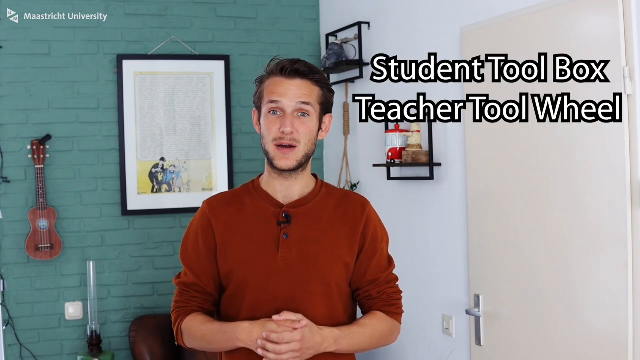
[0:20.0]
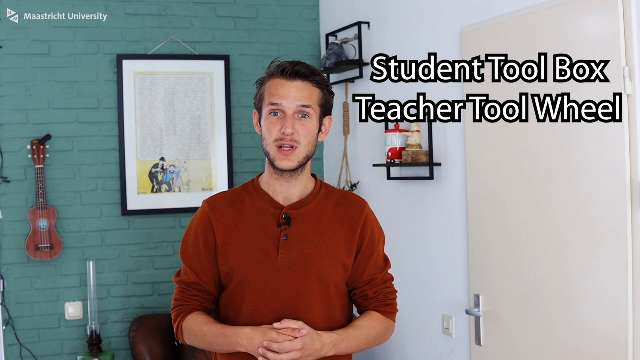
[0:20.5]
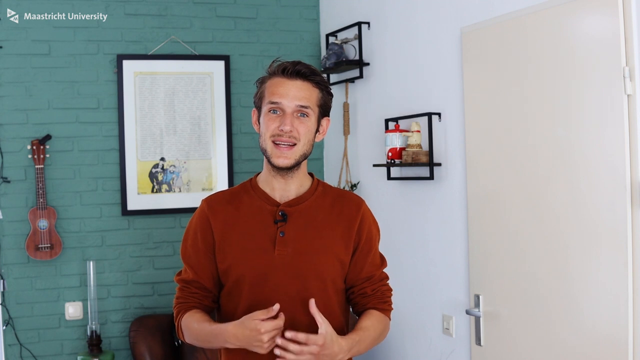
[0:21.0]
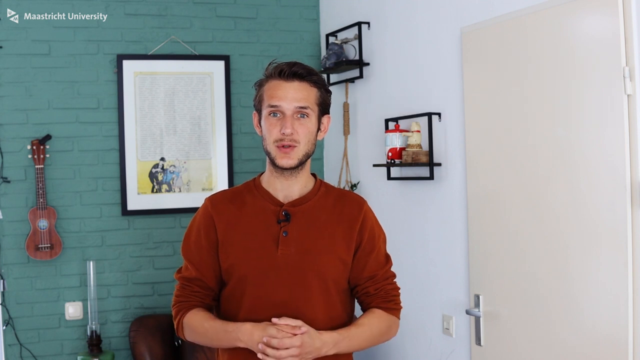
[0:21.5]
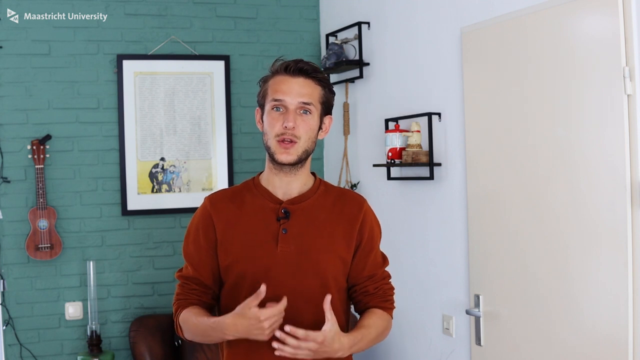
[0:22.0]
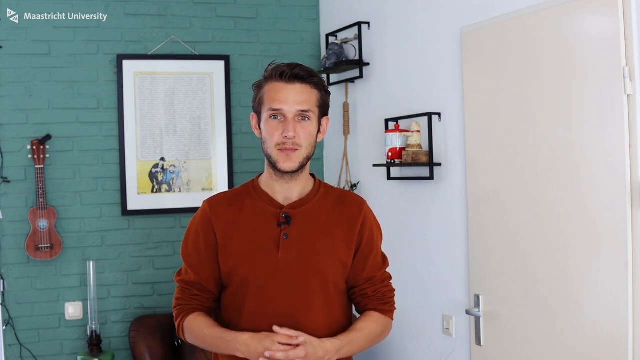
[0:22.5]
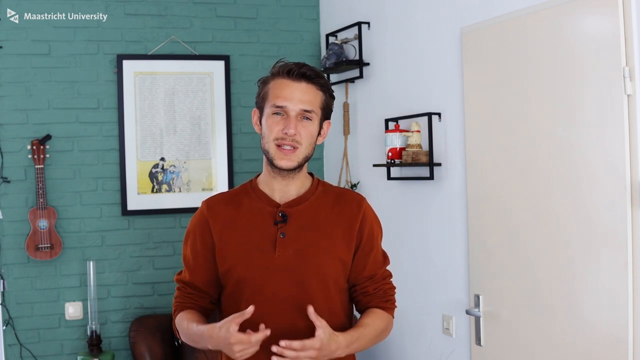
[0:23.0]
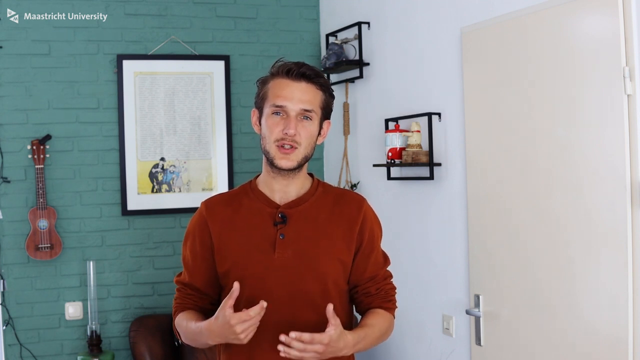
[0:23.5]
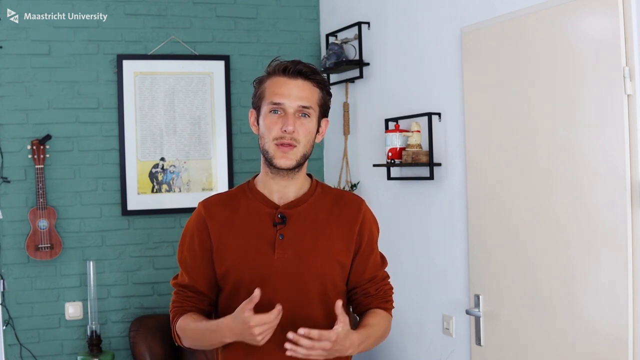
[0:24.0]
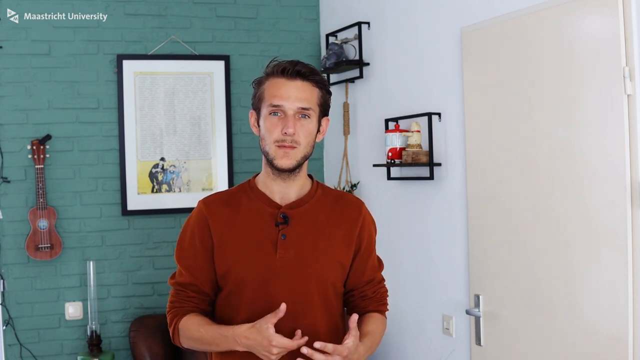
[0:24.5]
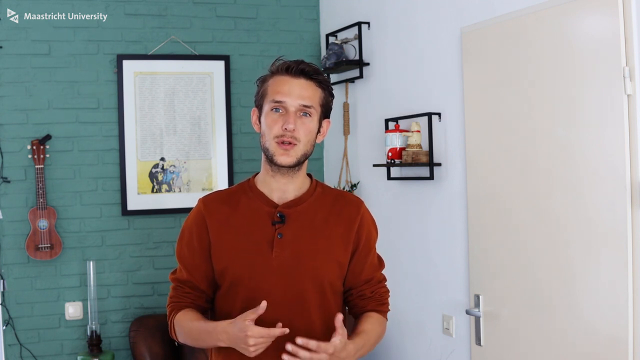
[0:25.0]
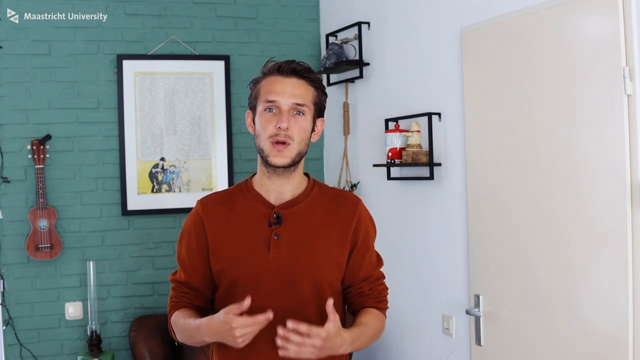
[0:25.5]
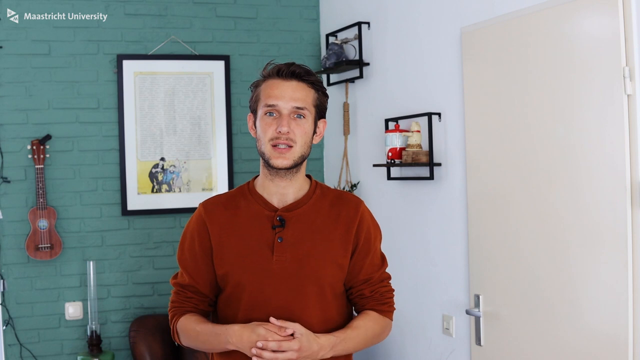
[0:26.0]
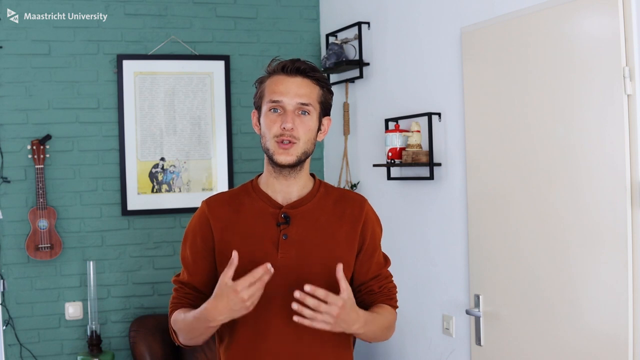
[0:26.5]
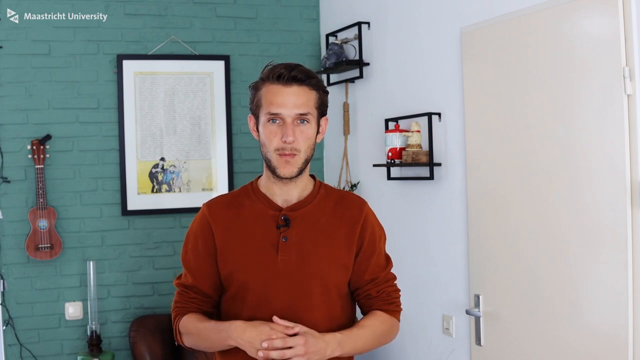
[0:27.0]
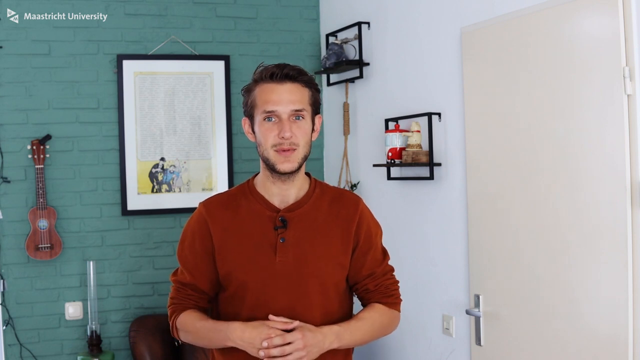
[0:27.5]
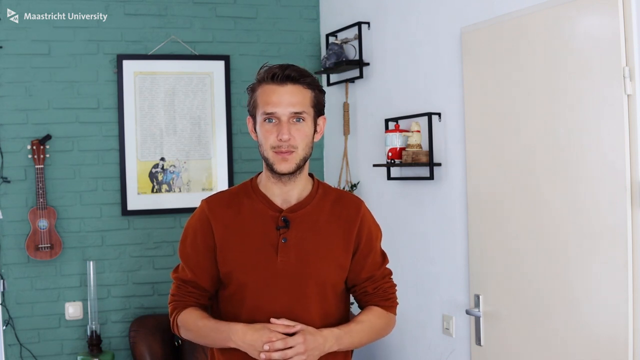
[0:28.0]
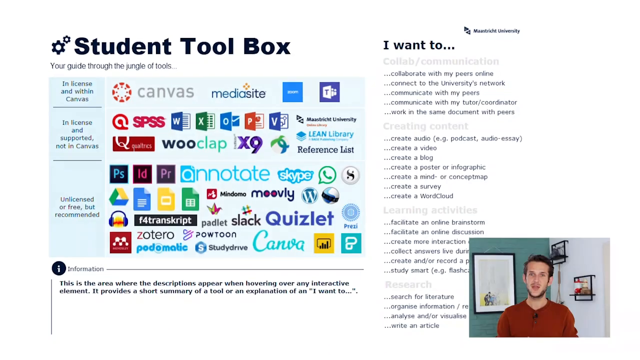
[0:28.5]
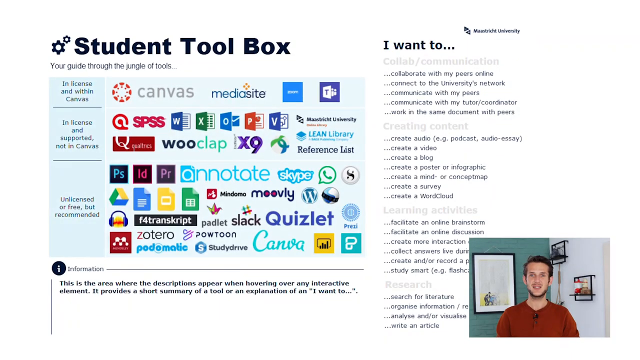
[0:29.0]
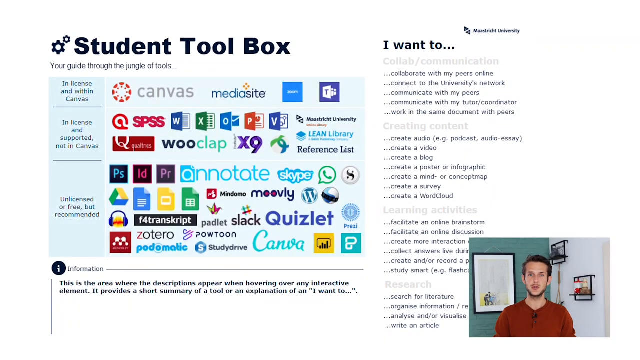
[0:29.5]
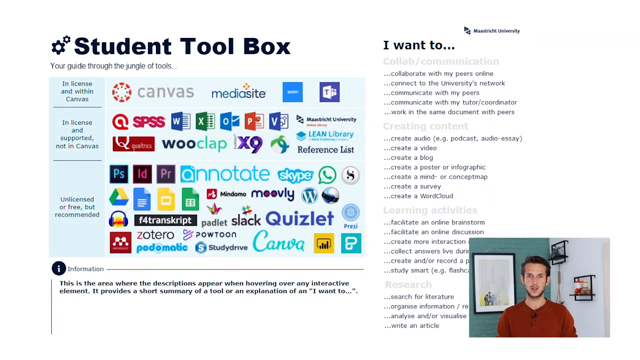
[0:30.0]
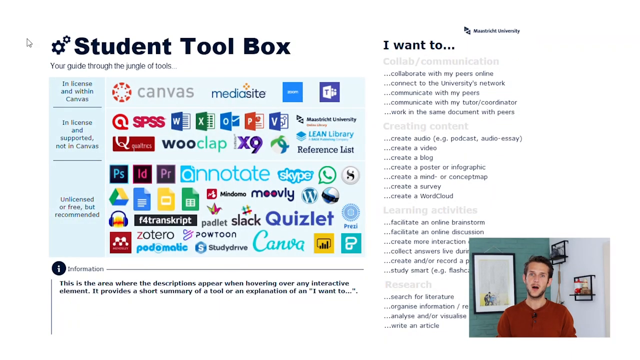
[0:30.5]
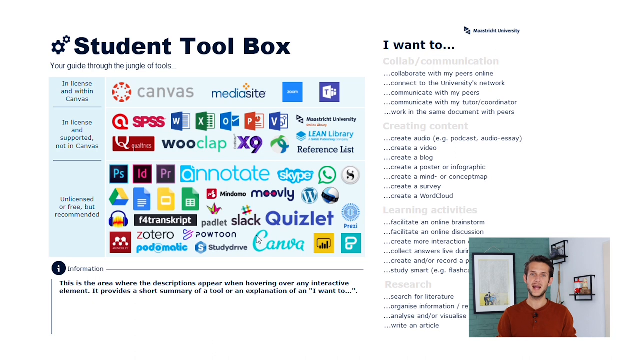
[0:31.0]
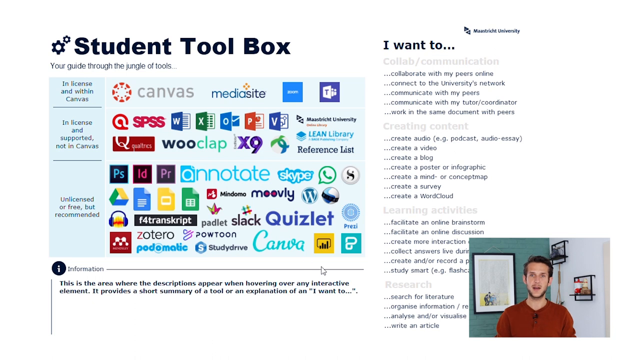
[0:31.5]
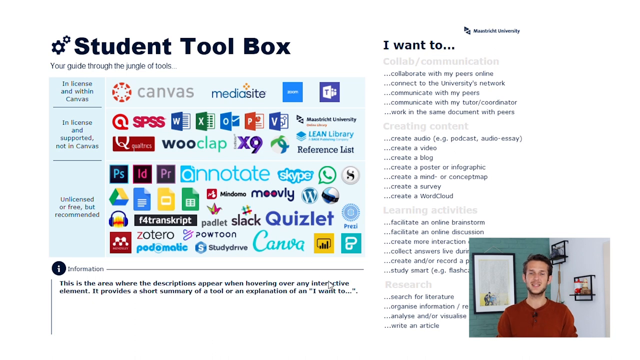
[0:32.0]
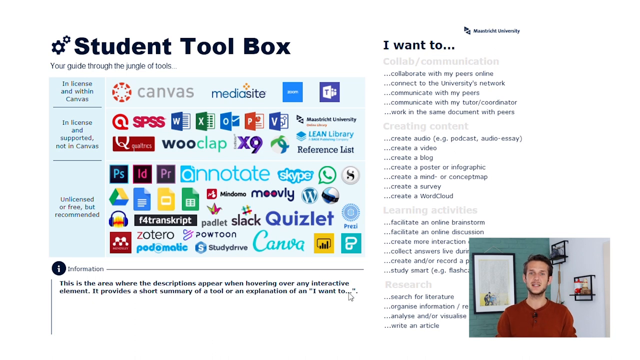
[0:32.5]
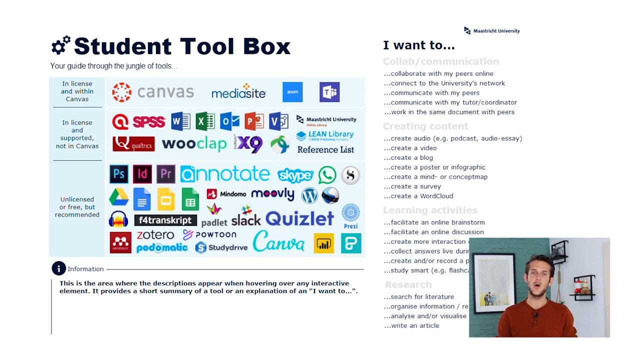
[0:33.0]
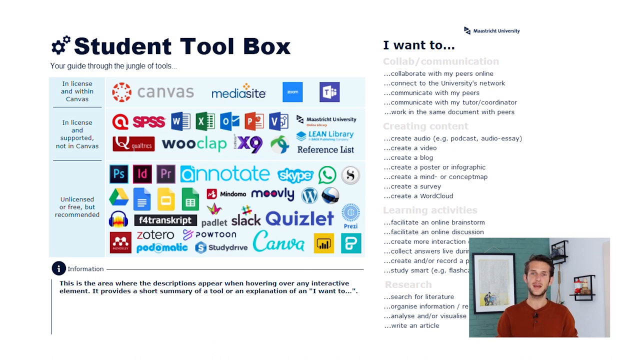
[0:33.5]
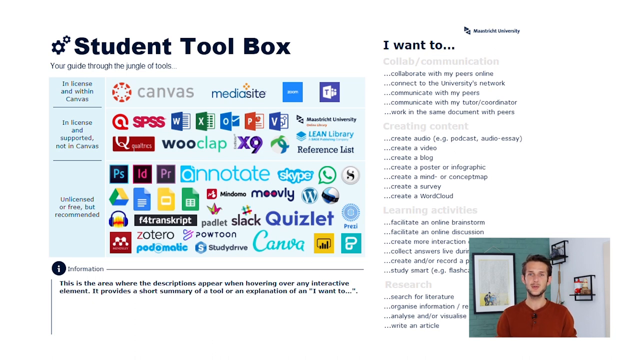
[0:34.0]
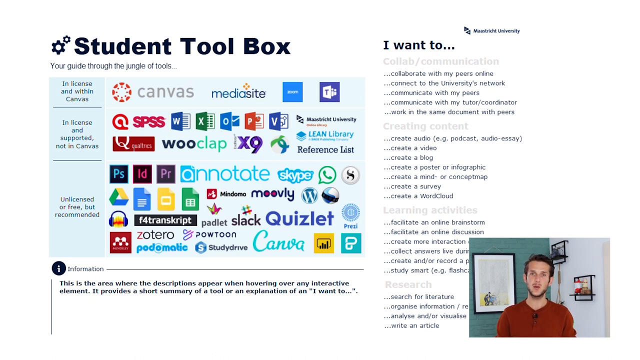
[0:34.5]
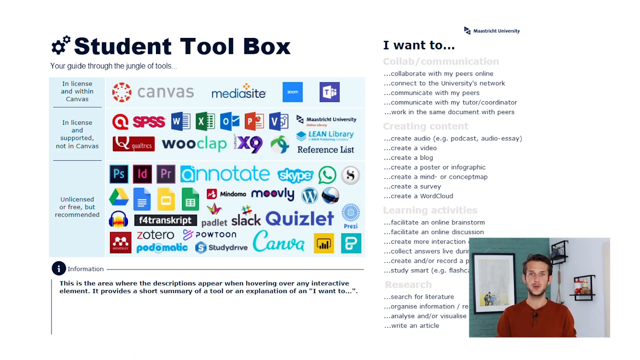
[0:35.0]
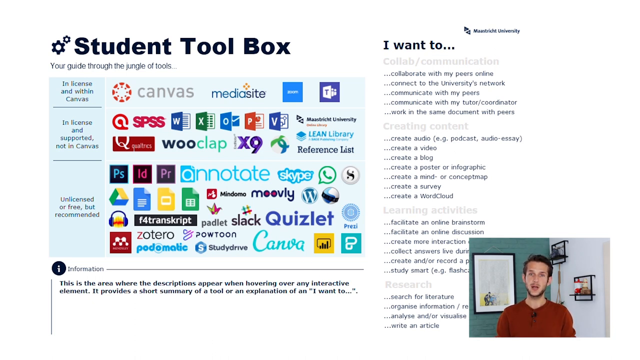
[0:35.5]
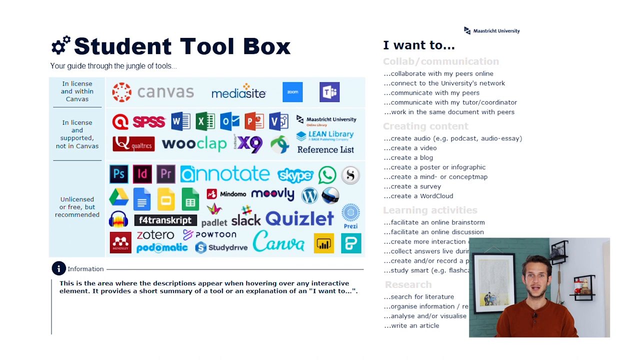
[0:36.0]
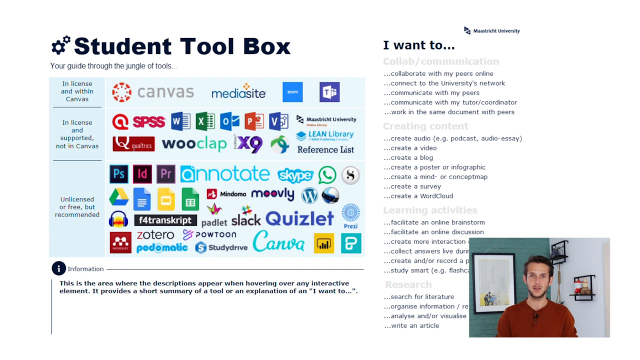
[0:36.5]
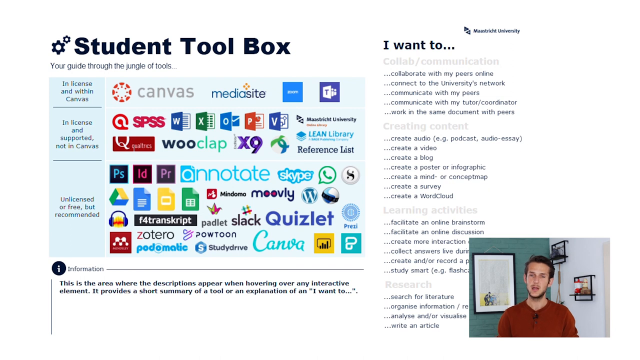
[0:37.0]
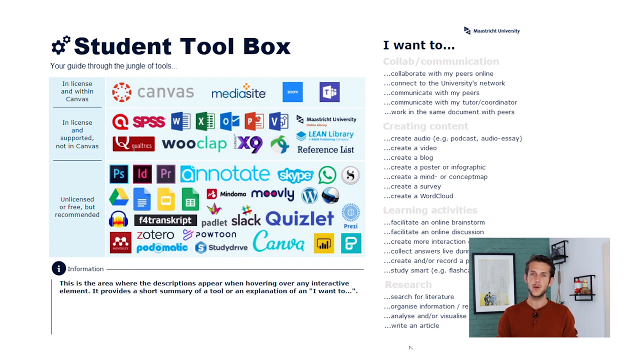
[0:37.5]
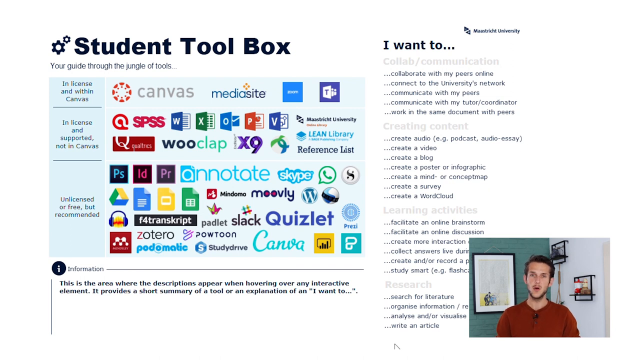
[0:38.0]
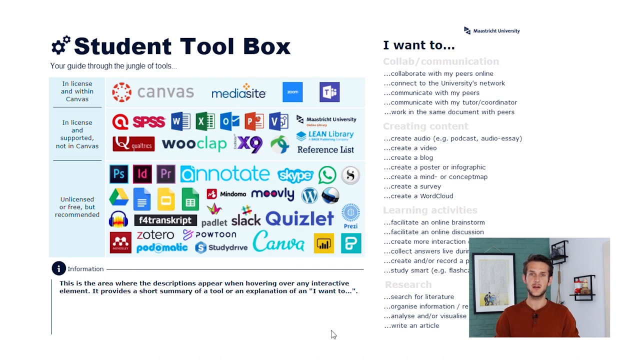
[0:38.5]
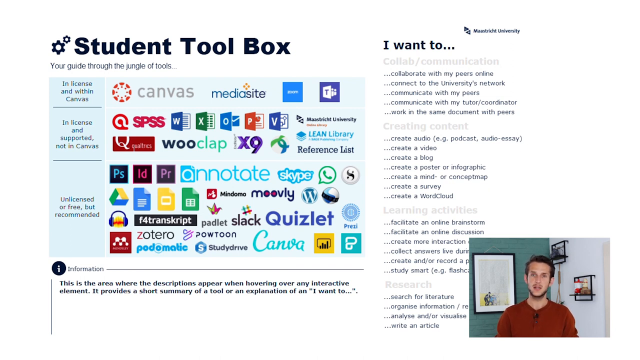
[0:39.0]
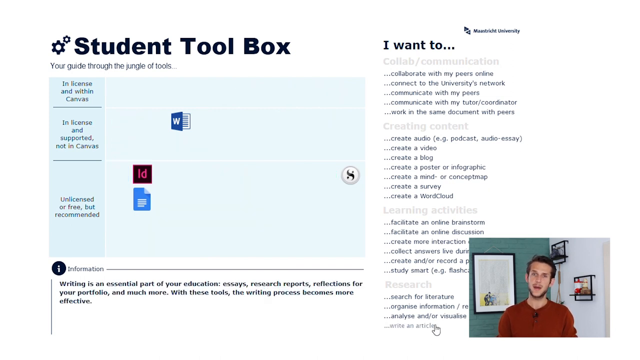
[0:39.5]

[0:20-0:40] The words on his right disappear, and the man keeps speaking to the camera, occasionally squinting and moving his hands apart as he gestures, making upward motions with his hands. The video then transitions to what looks like a screen recording or screenshot of the student toolbox. Underneath "student toolbox" is "a guide to the jungle of tools", and the tools are categorized as licensed and within Canvas, licensed and supported but not in Canvas, and unlicensed, which are free but recommended. Many icons representing different software sit inside these categories. An "I want to..." heading lists categories such as collaborative communication, creating our content, learning activities, and research. Below the chart is an information area, which states that it is where descriptions appear when any of the interactive elements is hovered over, giving a short summary of a tool or an explanation of an "I want to..." item.